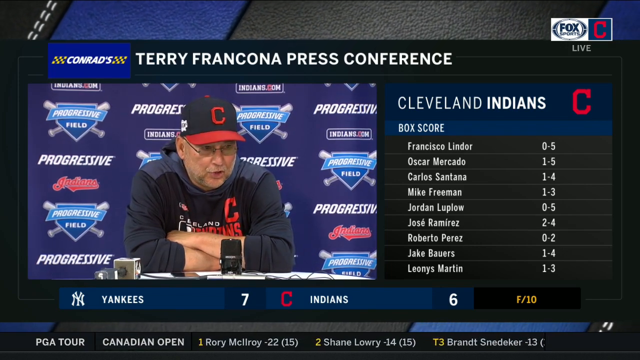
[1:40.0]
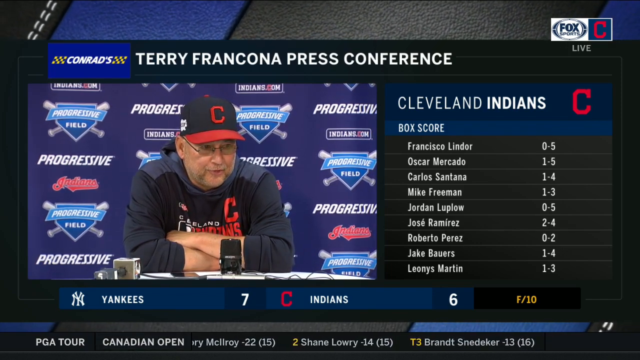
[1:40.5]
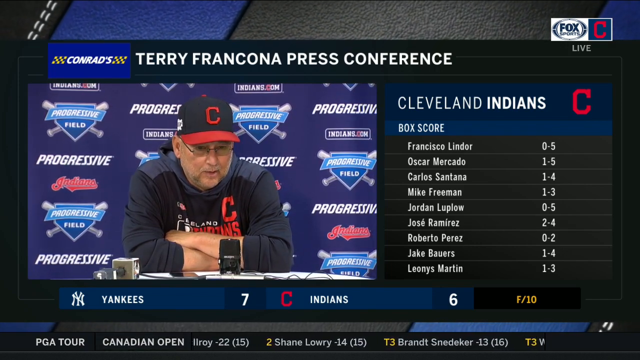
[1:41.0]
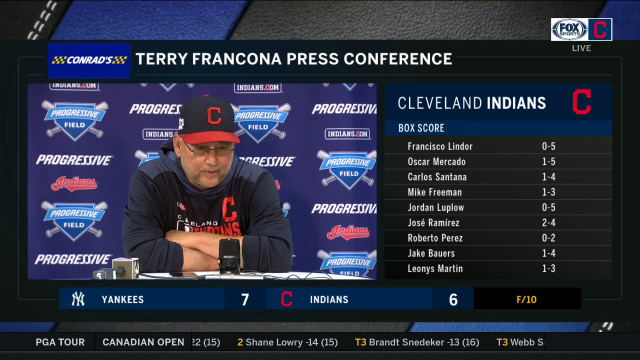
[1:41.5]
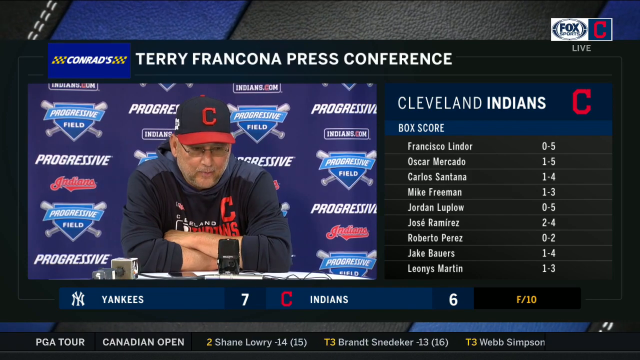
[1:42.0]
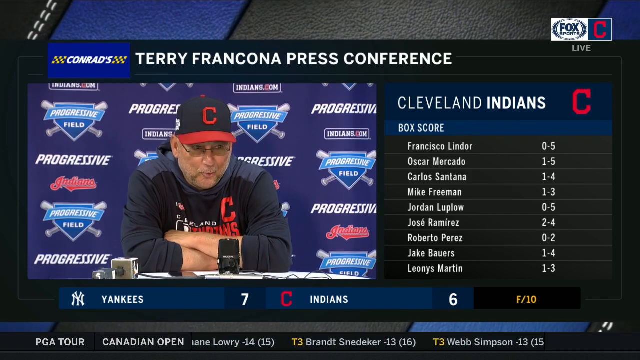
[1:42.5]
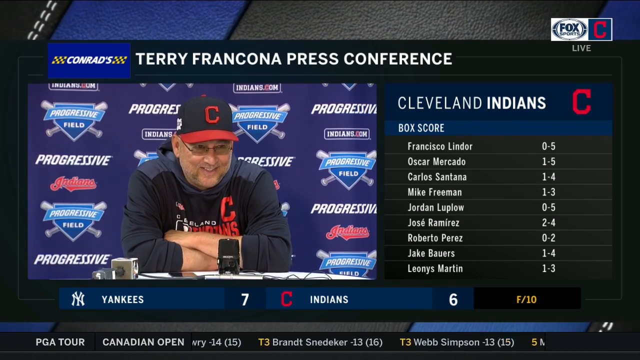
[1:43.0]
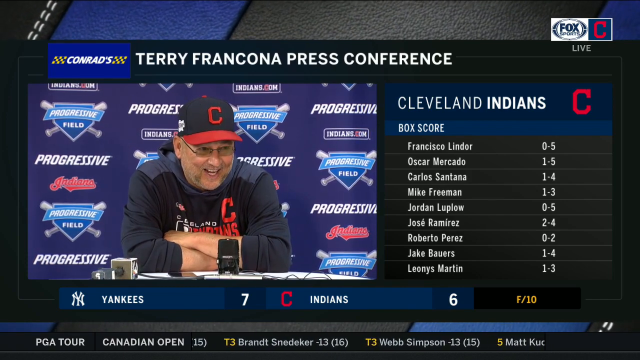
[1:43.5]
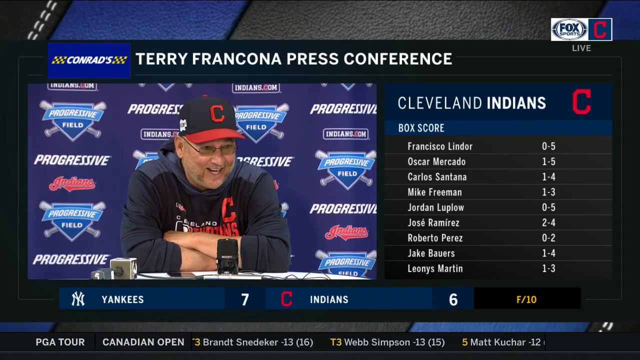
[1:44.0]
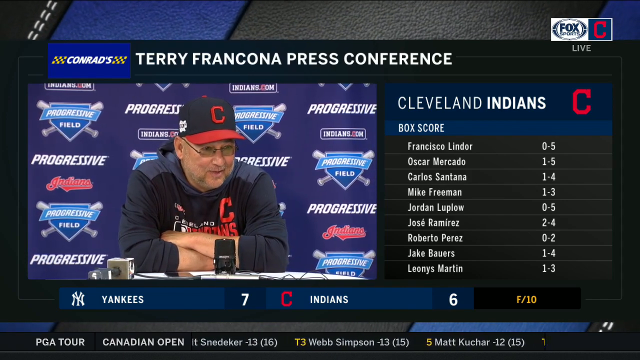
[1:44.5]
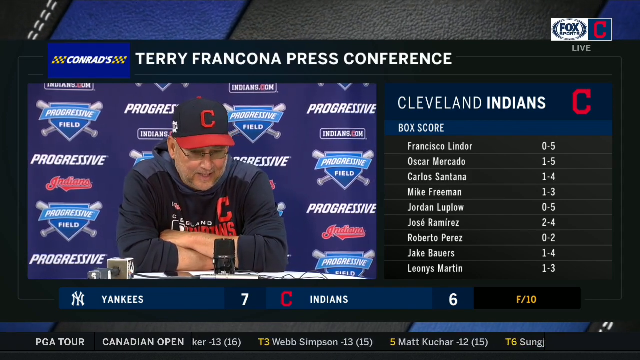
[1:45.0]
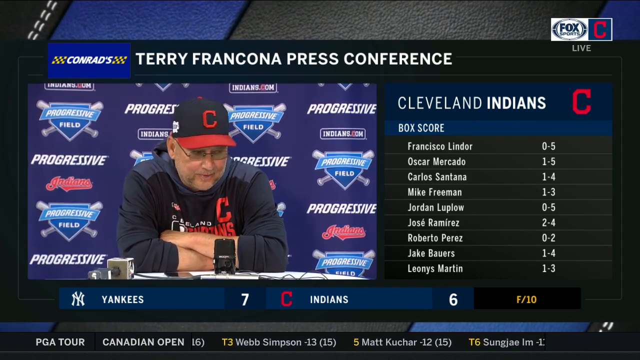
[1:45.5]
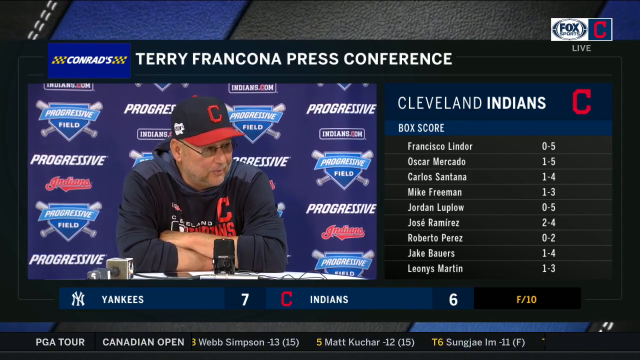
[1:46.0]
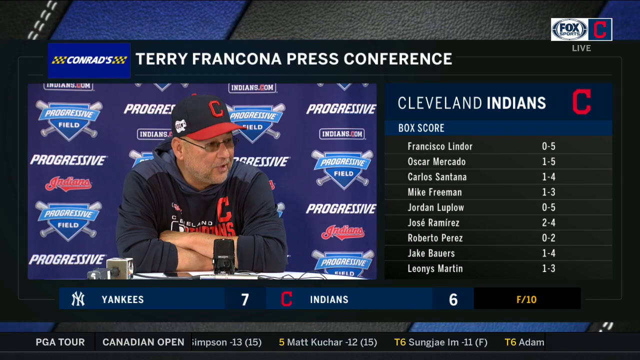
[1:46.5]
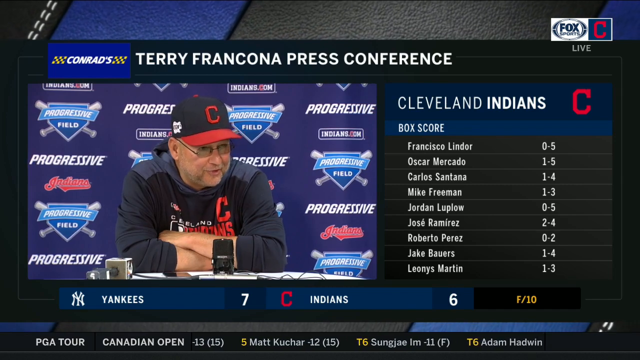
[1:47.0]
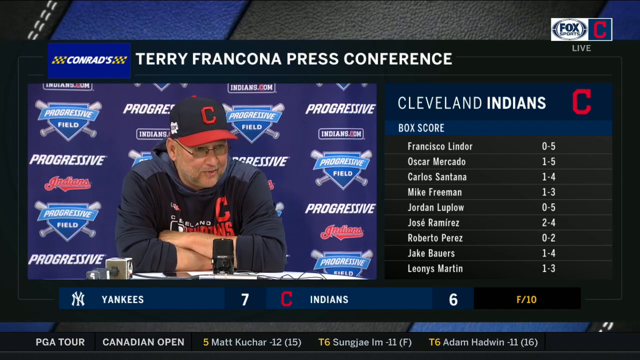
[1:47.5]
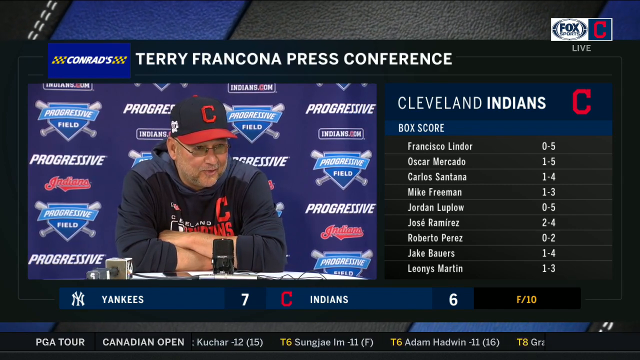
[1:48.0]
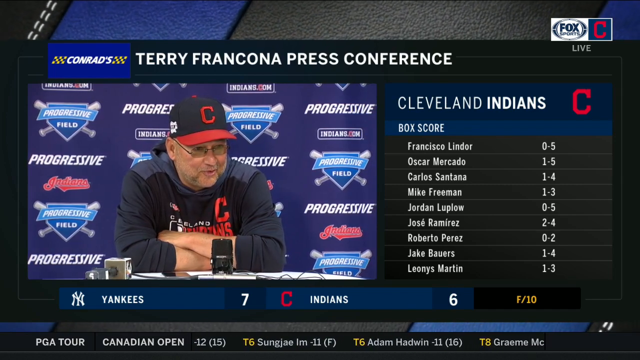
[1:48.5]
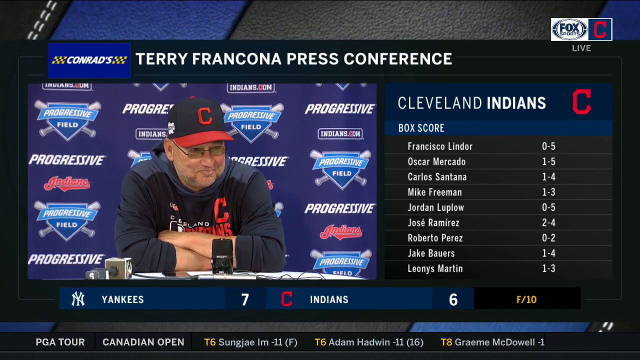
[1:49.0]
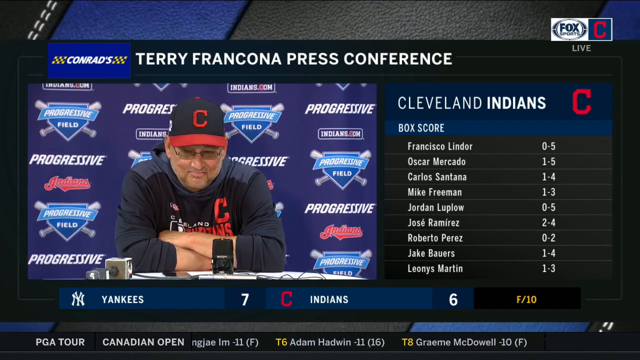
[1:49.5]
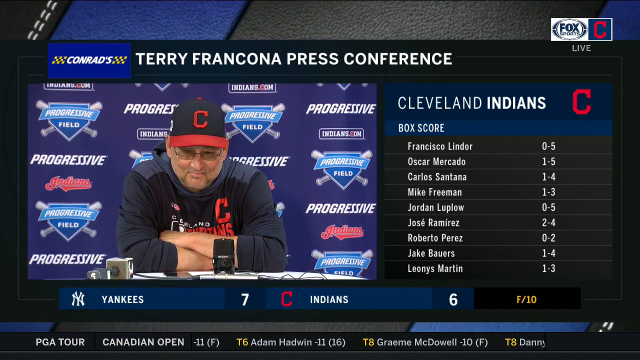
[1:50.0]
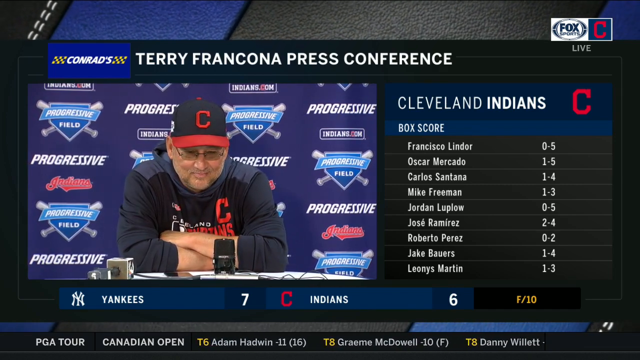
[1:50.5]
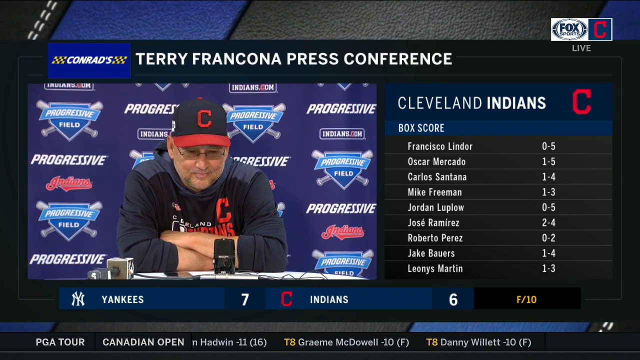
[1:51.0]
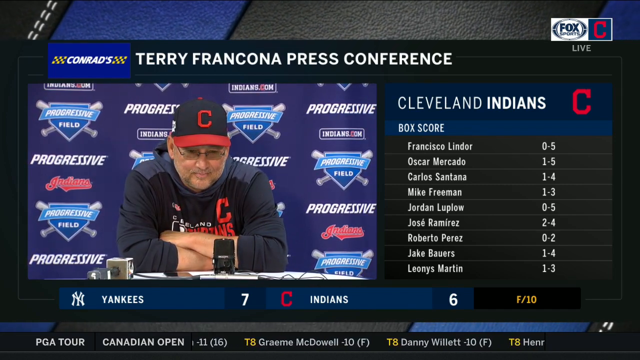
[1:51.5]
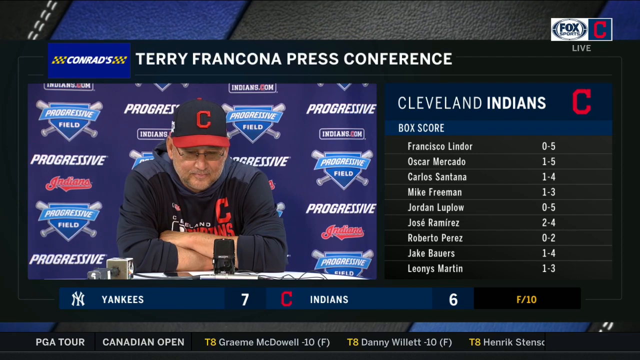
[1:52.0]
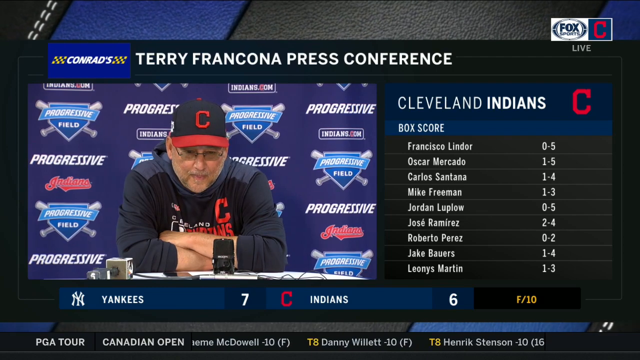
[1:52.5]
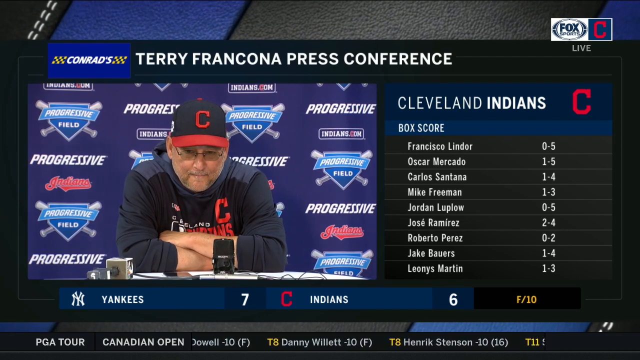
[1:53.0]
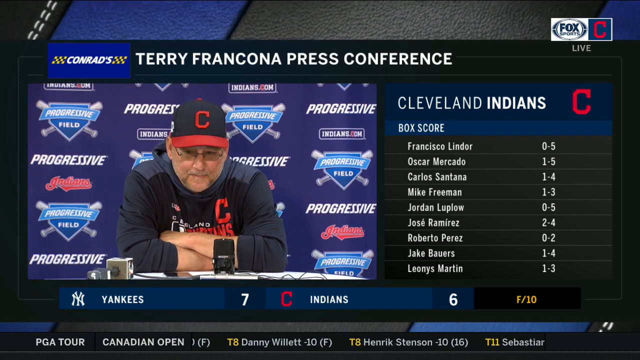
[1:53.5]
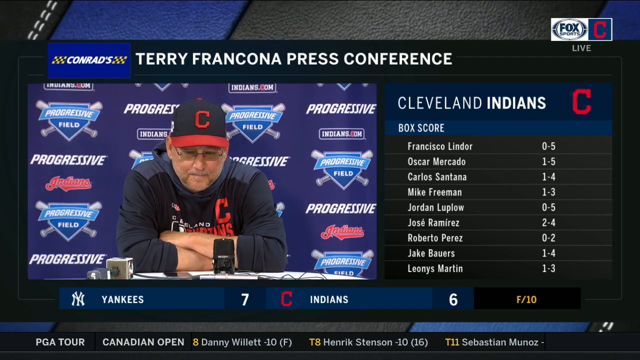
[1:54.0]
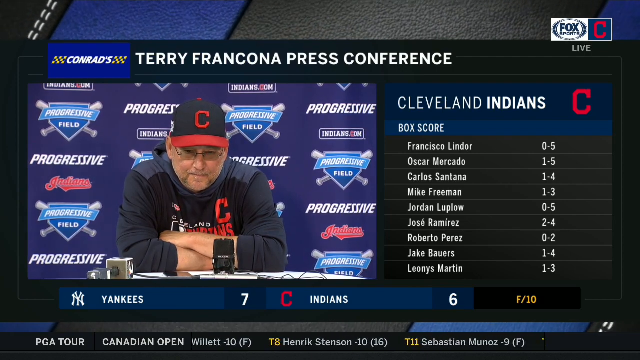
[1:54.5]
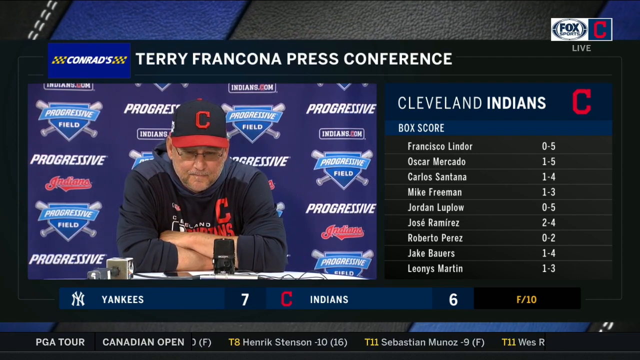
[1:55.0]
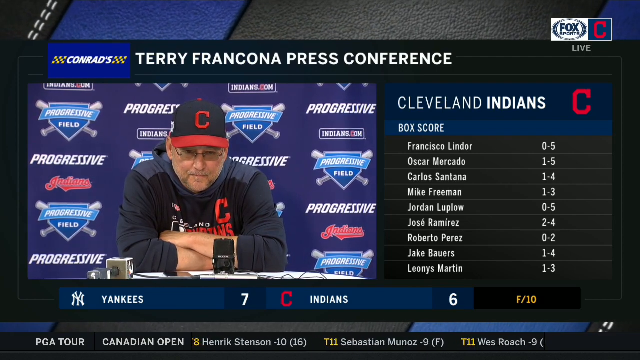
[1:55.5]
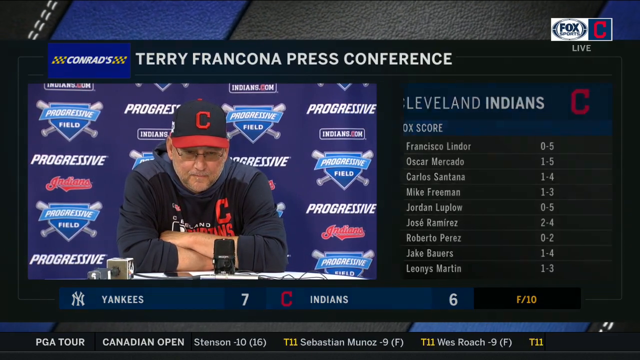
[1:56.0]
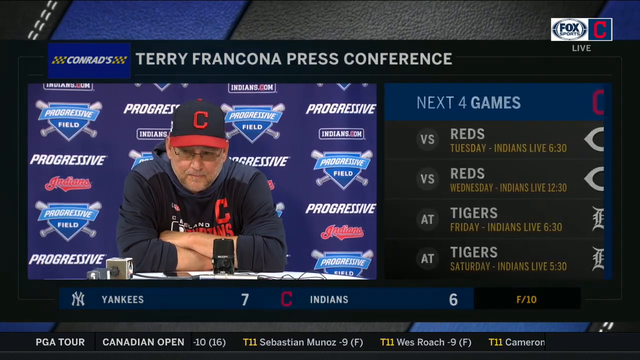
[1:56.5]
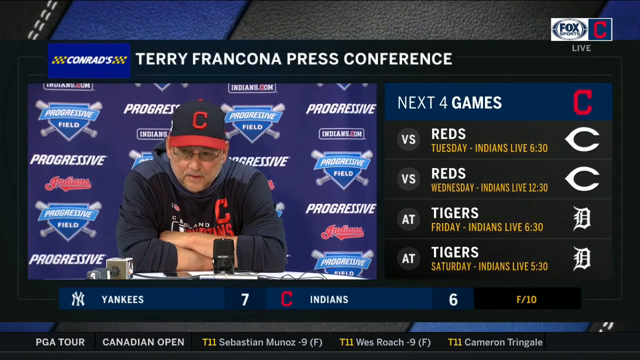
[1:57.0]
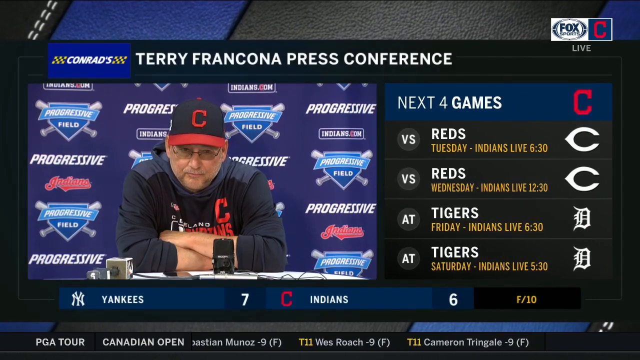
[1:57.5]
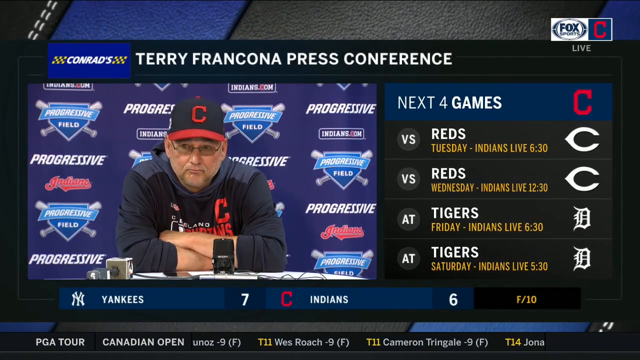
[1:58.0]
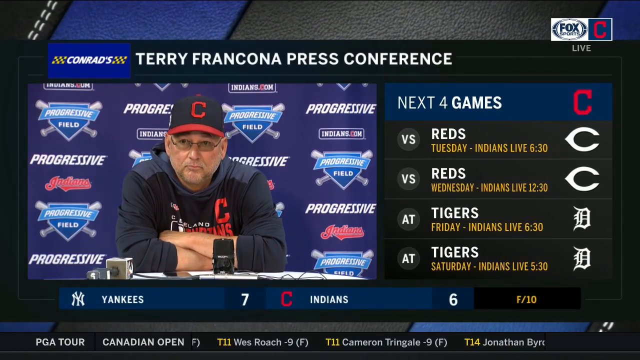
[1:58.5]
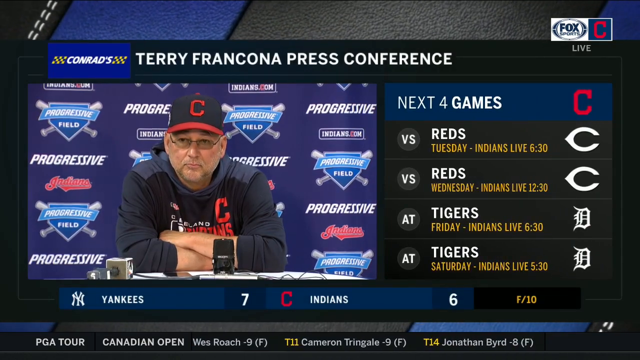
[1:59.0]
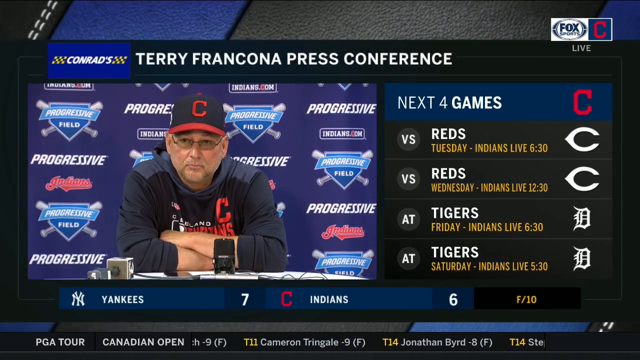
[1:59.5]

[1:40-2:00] On the left side of the screen is the Cleveland Indians coach wearing his Cleveland Indians baseball cap. The right section shows a roster of players who play for the Cleveland Indians, followed by the next four games: two against the Reds and two against the Tigers. The coach, Terry Francona, talks directly to people in the audience. Behind him are logos including Progressive and the Indians, among various others. The top right of the screen reads "Fox Sports" along with a Cleveland Indians logo.